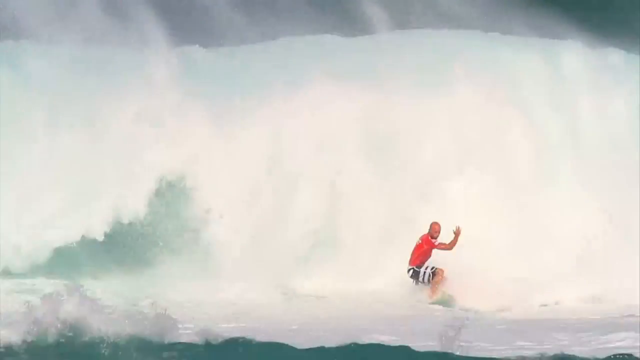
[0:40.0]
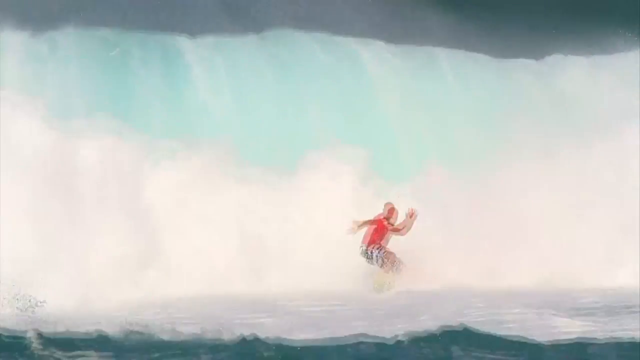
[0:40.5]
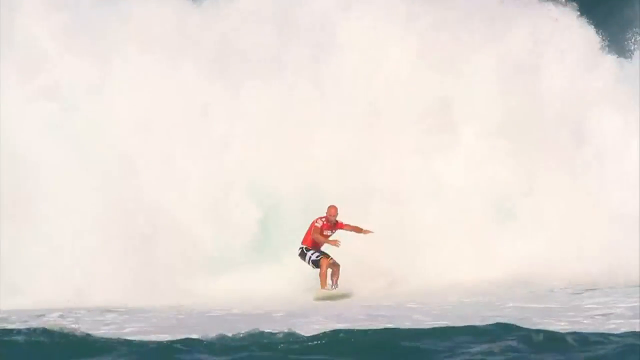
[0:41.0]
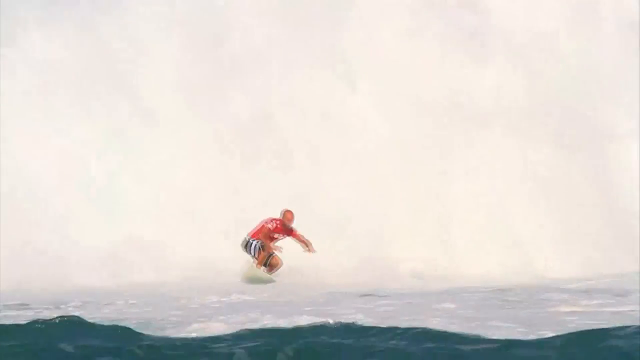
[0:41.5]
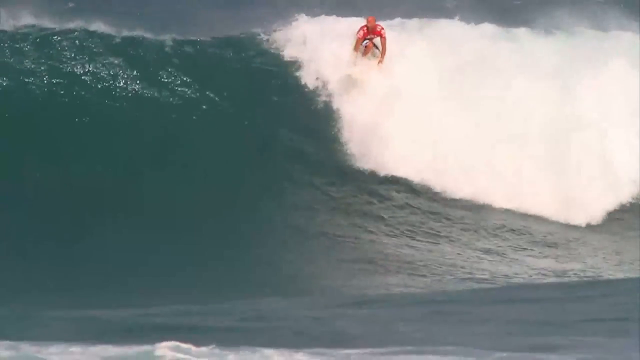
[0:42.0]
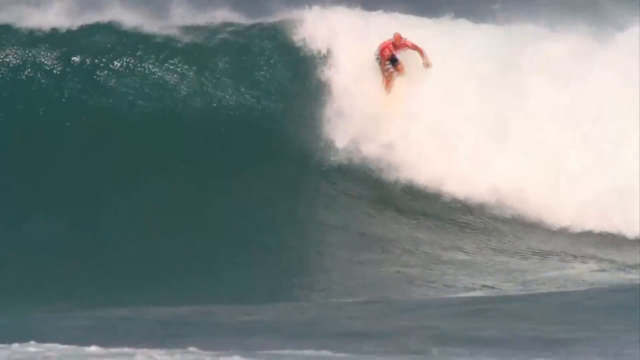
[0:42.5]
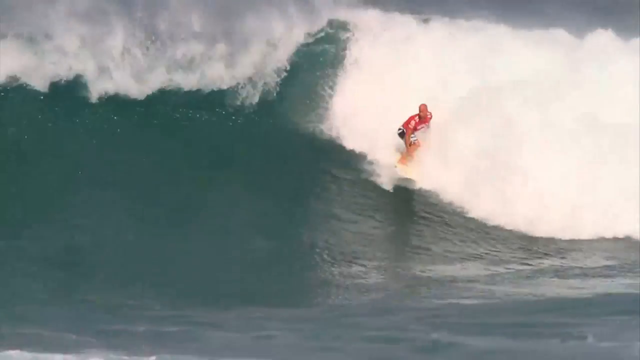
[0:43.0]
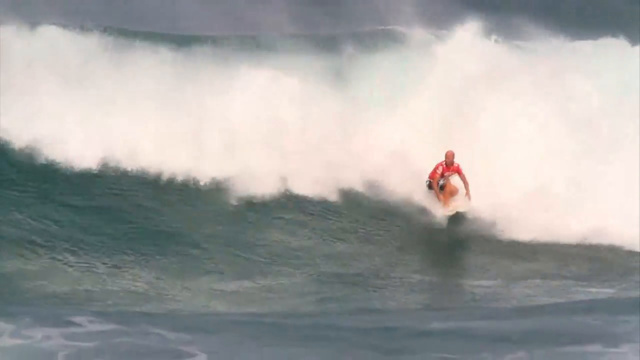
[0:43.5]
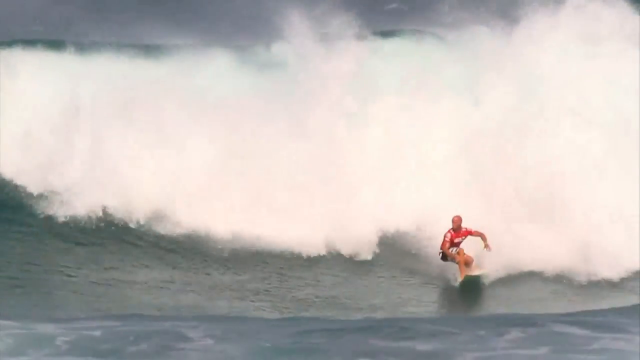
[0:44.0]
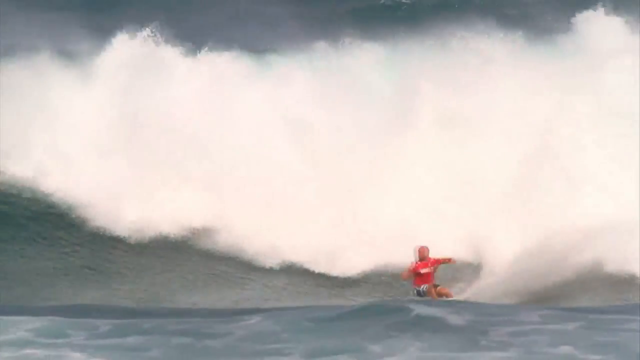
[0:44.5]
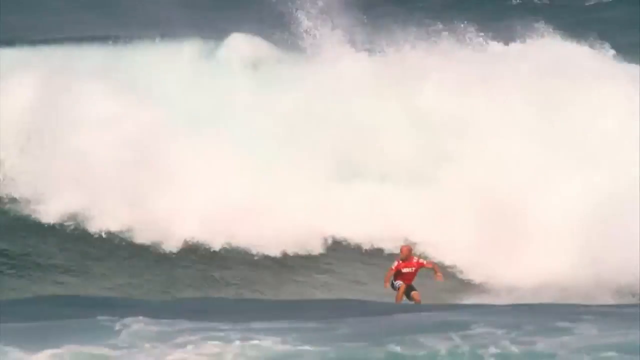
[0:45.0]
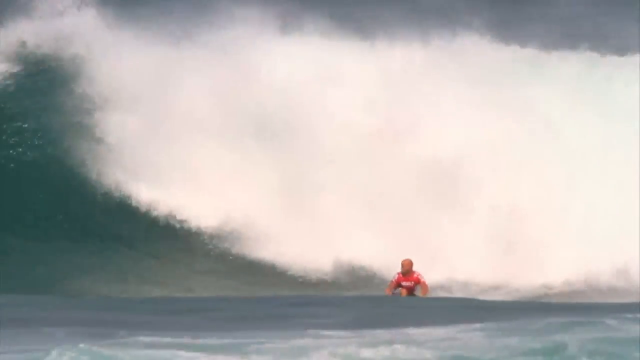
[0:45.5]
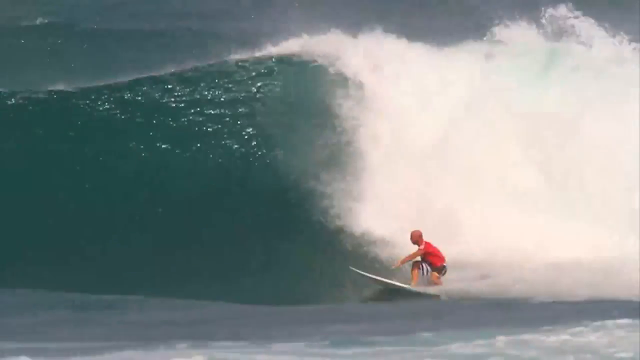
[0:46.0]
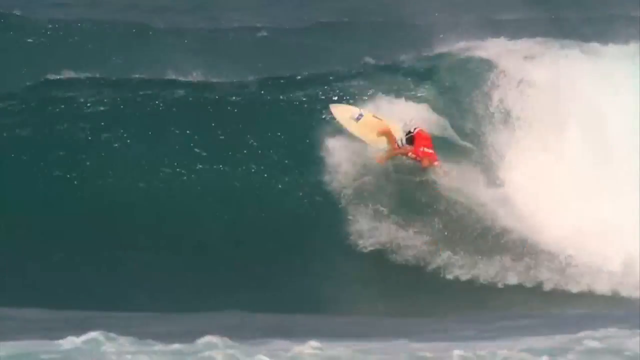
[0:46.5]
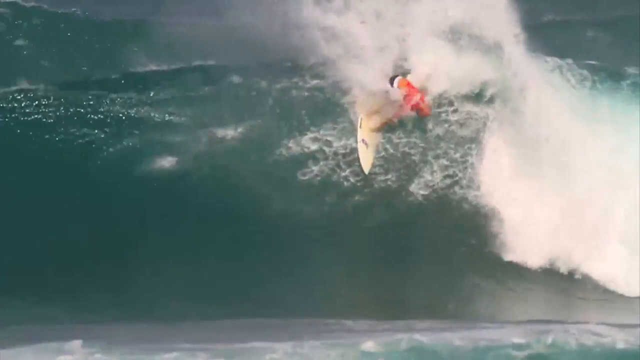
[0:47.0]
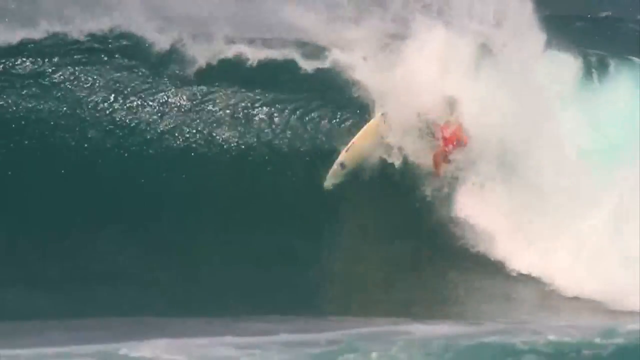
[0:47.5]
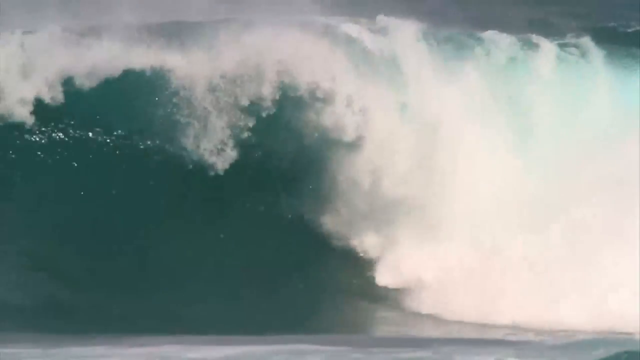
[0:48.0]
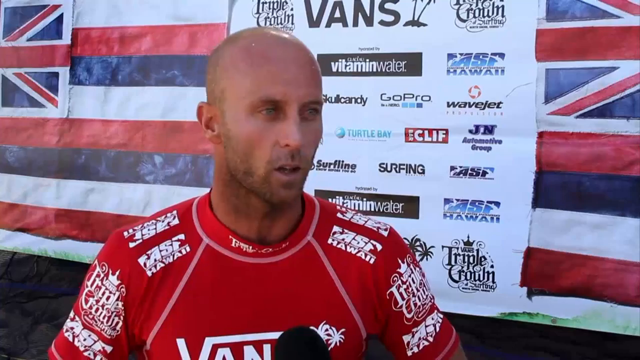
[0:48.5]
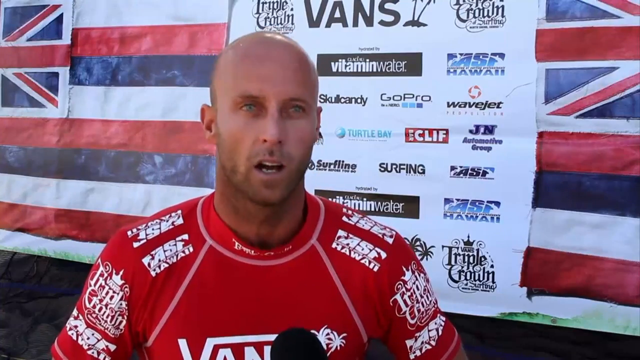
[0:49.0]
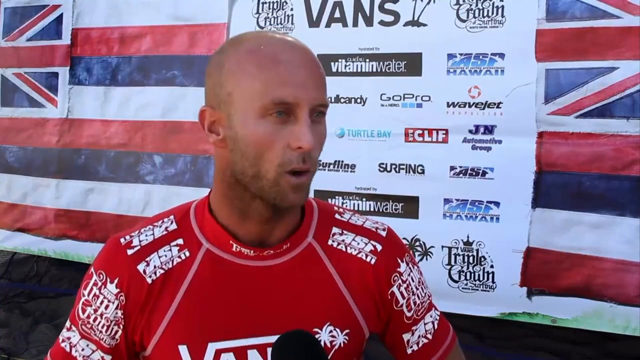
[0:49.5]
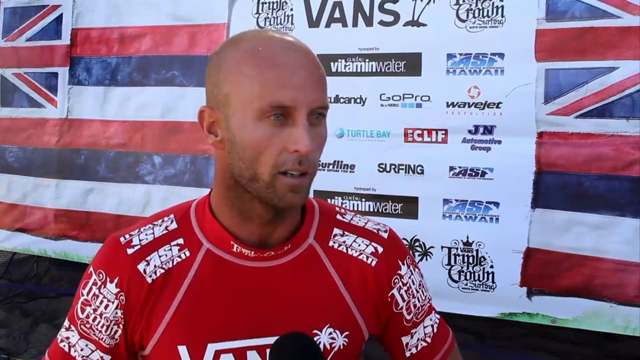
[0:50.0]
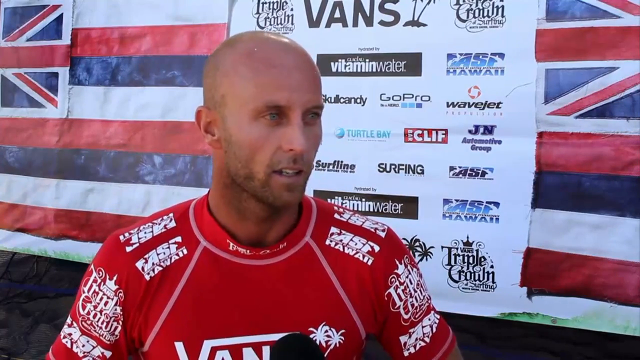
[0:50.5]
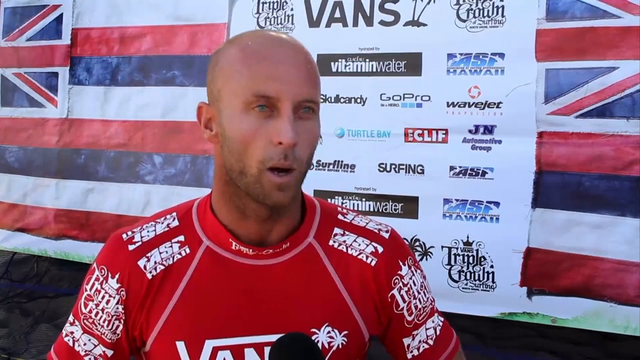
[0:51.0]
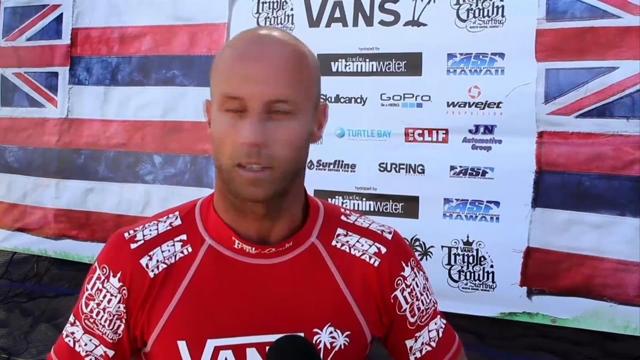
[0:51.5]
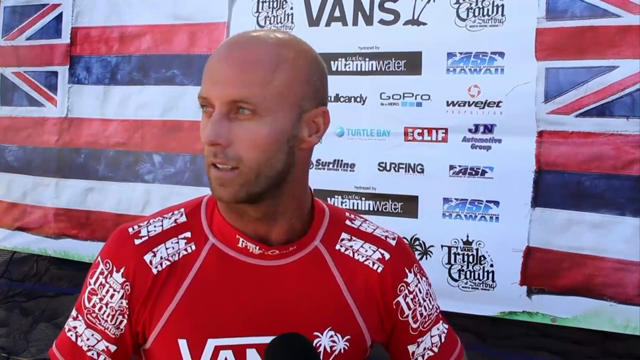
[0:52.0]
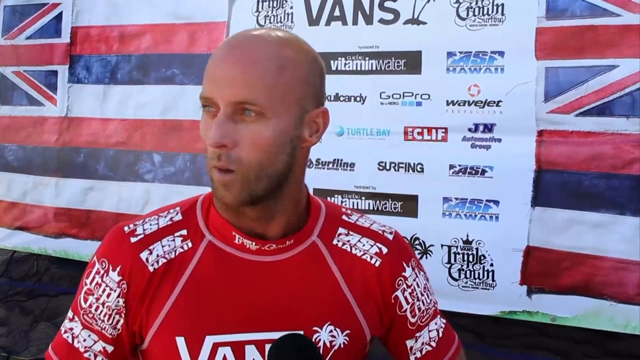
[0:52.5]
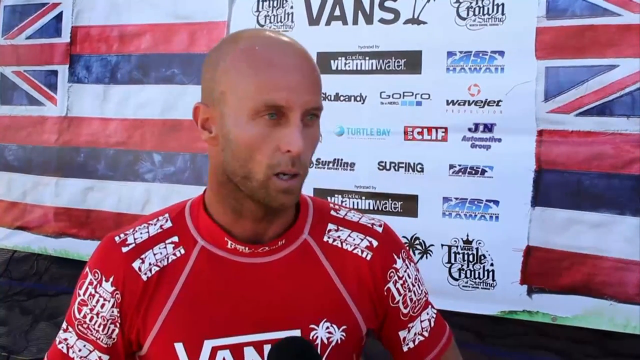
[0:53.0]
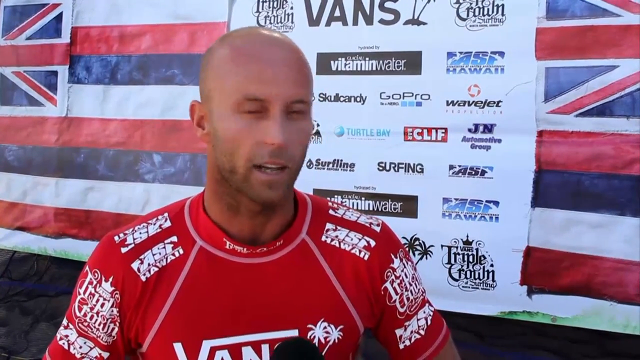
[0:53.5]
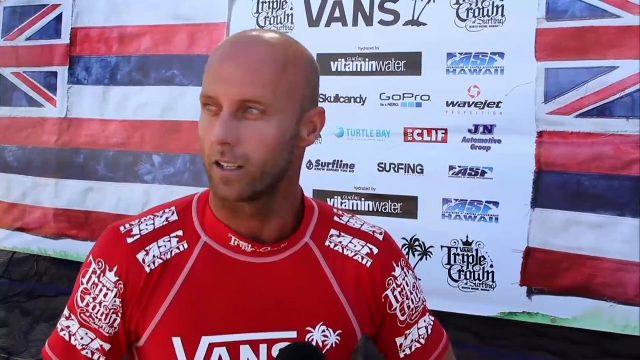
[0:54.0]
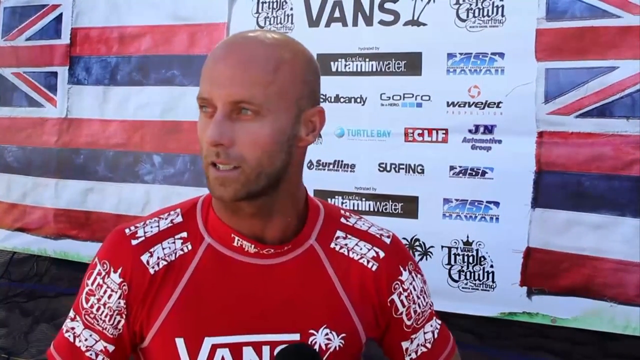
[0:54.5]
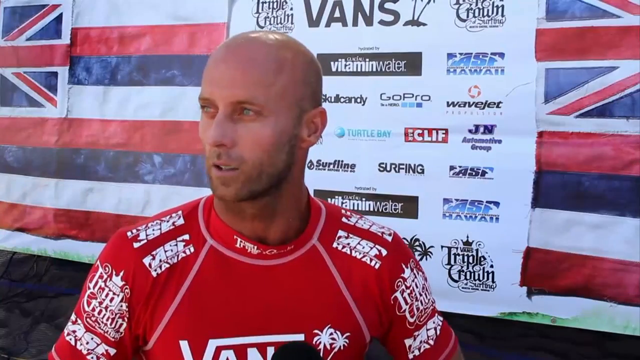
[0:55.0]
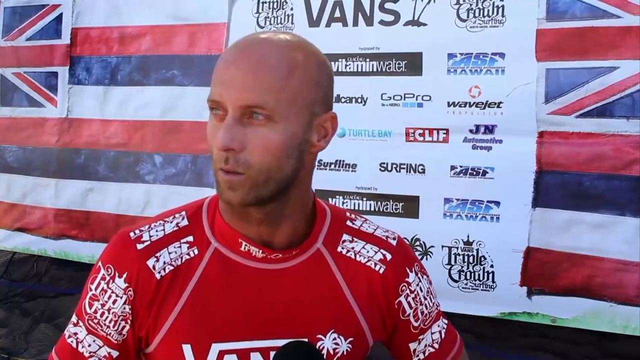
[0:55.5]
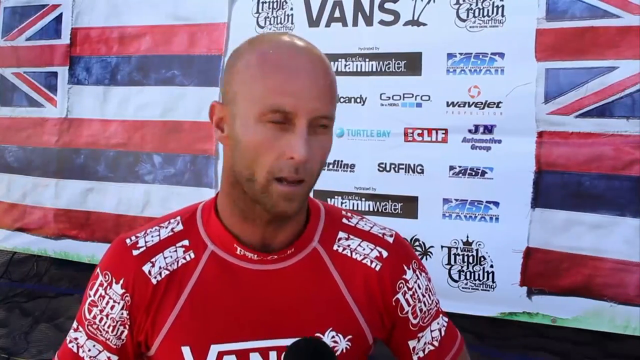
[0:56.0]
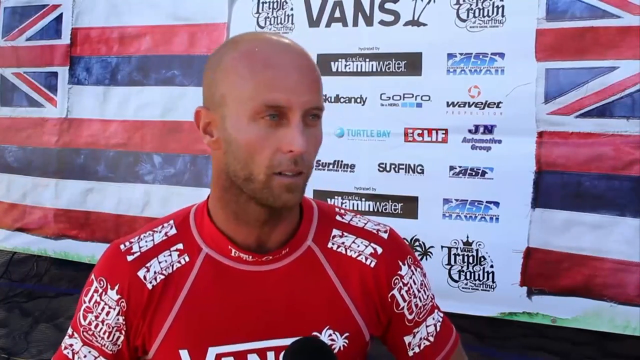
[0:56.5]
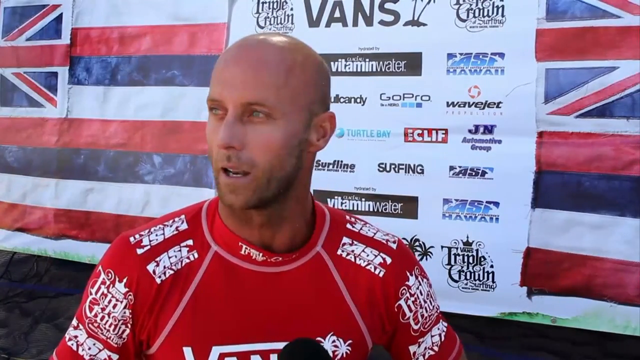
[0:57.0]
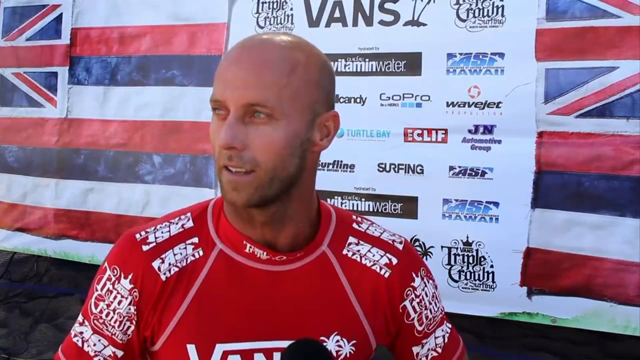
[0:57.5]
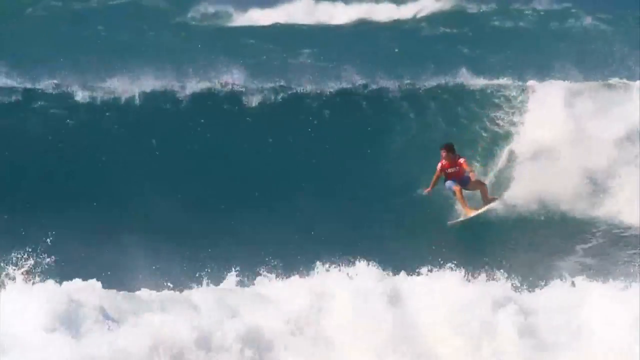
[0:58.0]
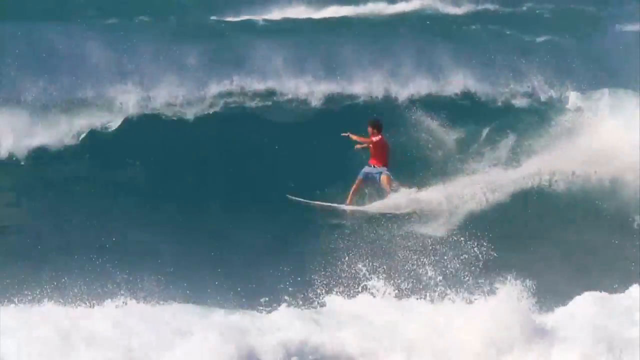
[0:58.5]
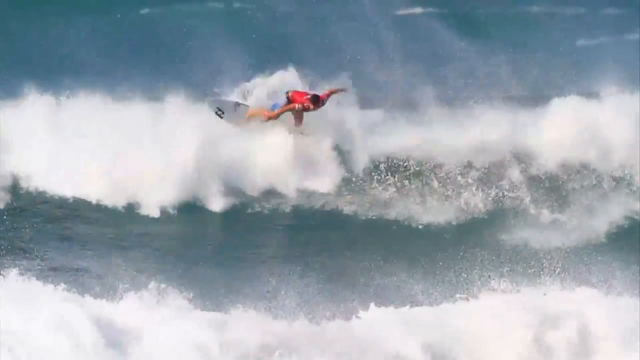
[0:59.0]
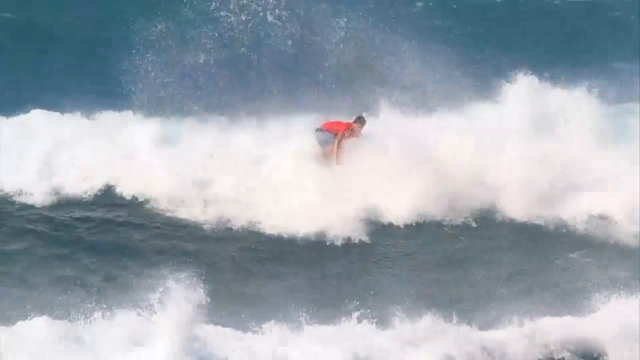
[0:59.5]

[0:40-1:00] The red surfer, with his arms in a number 4 position, wears an orange shirt and black shorts and rides a surfboard. Behind him a large wall of water splashes violently onto the surface, creating a very white misty effect, and the waves chase after him as he rides away from them at high speed. The video cuts to the same man riding at the very tip of the waves, gliding flawlessly across the surface of the water while the white wall continues to pursue him. The surfer then falls off his surfboard and is engulfed by the water. The video cuts to an interview with the surfer: he stands in front of a camera wearing his red shirt, has a bald head, and is in front of English flags, which are sponsored by many different brands.